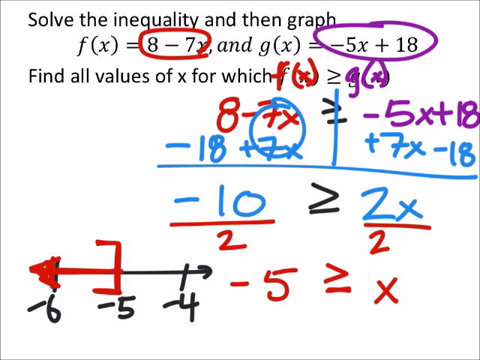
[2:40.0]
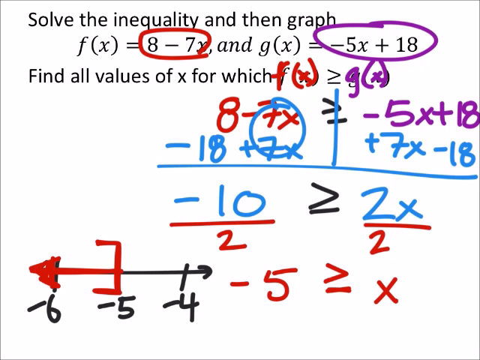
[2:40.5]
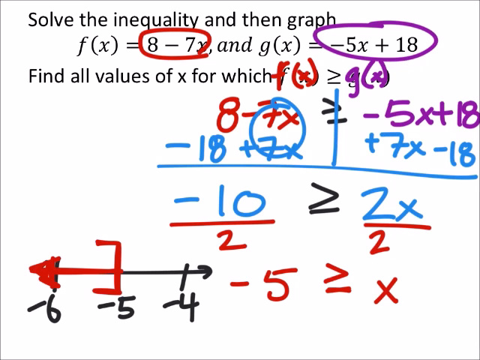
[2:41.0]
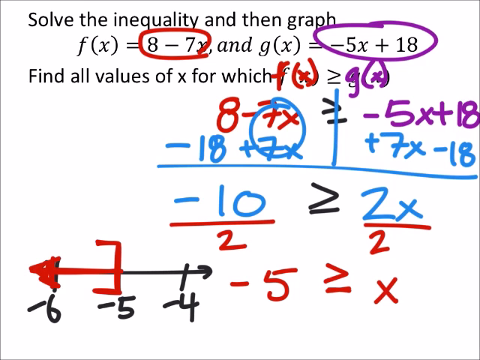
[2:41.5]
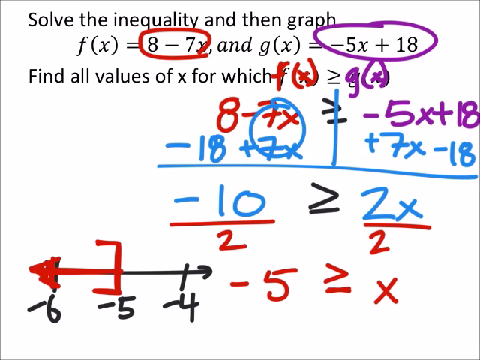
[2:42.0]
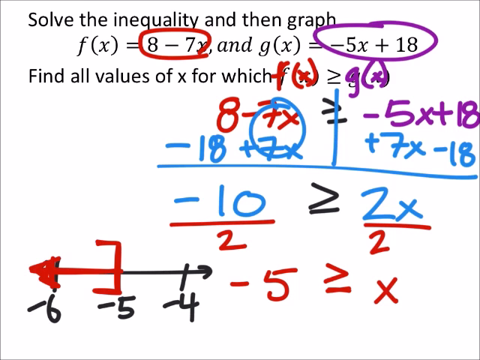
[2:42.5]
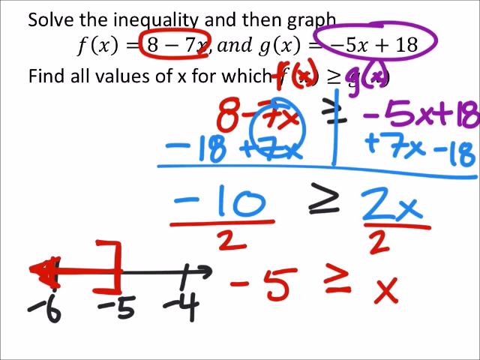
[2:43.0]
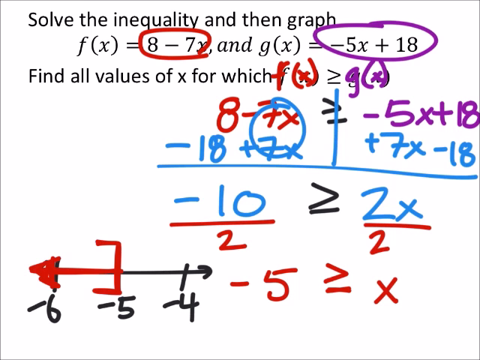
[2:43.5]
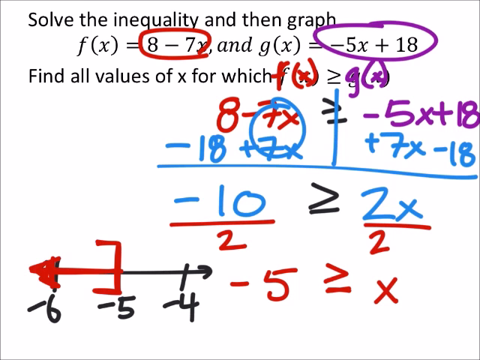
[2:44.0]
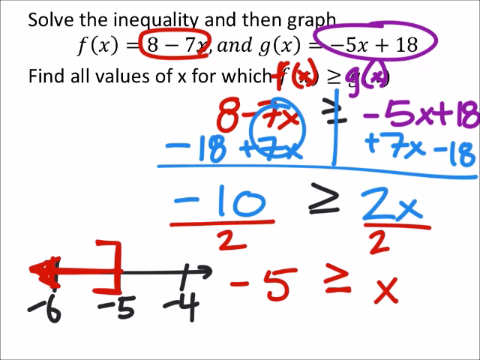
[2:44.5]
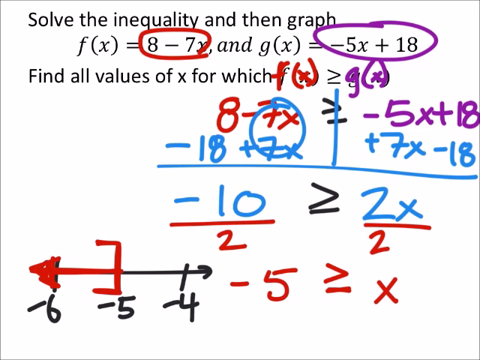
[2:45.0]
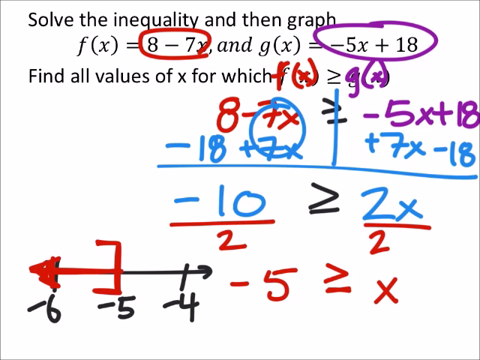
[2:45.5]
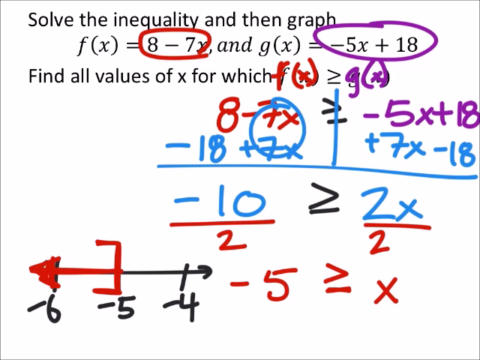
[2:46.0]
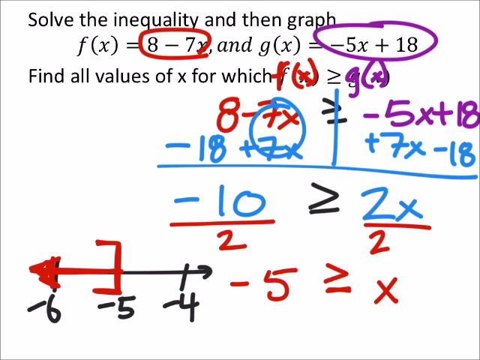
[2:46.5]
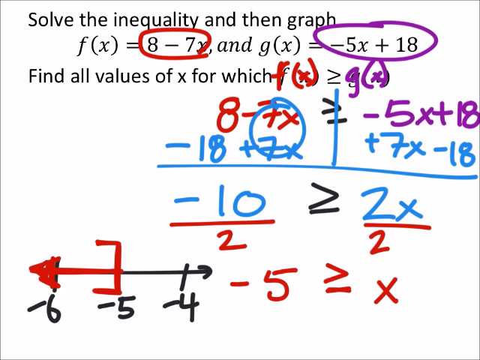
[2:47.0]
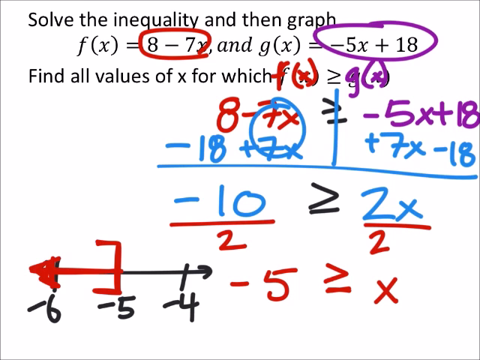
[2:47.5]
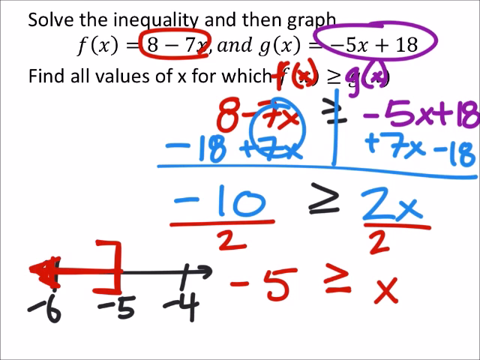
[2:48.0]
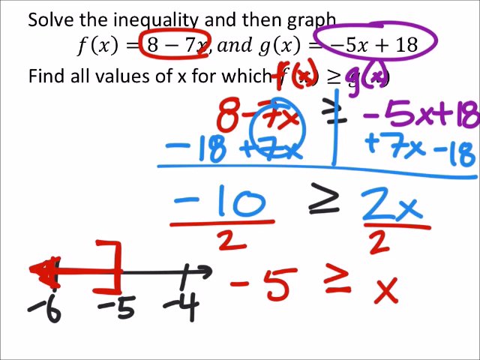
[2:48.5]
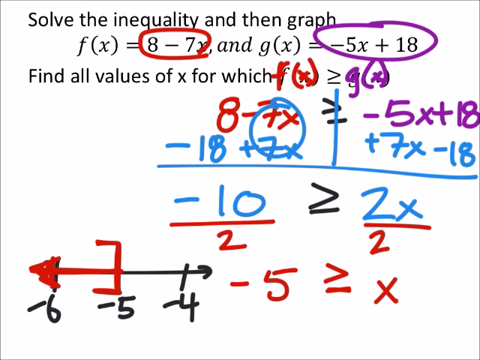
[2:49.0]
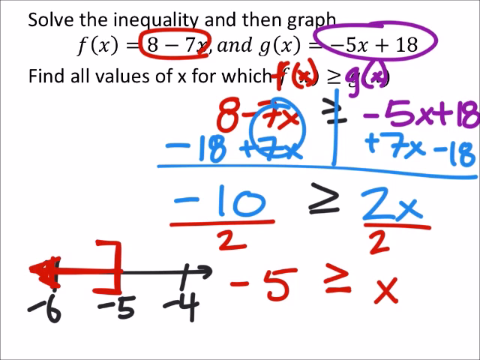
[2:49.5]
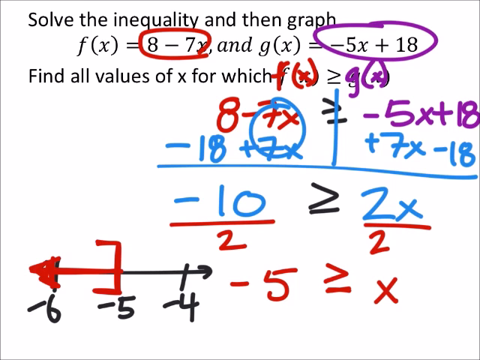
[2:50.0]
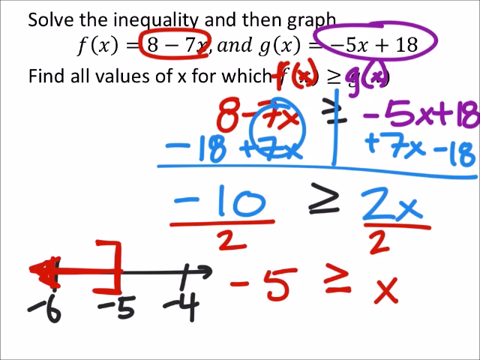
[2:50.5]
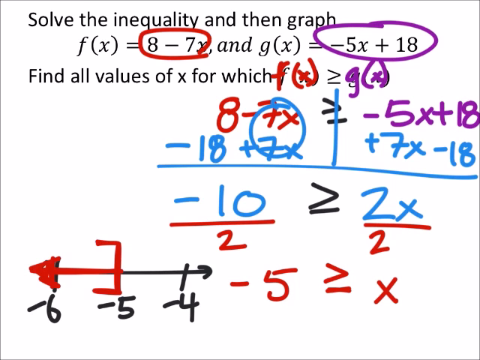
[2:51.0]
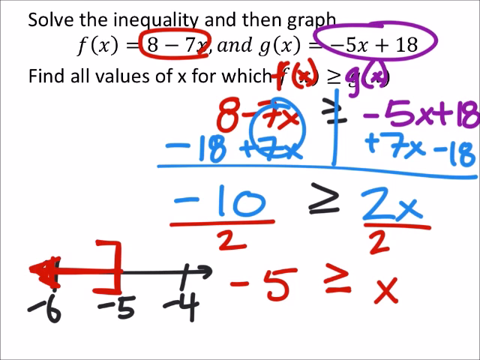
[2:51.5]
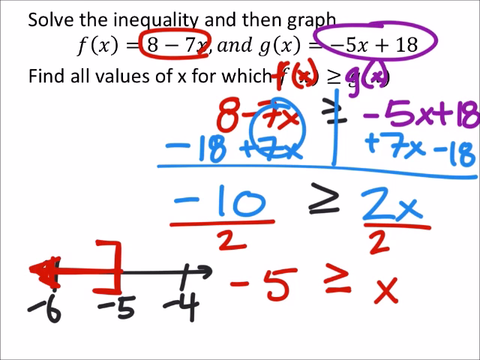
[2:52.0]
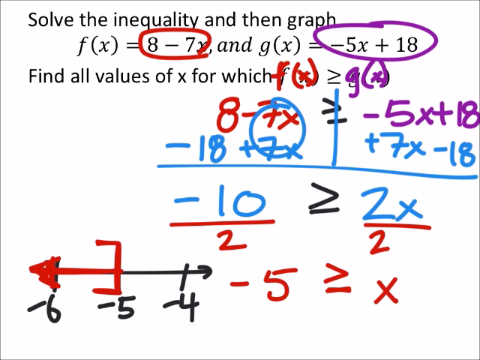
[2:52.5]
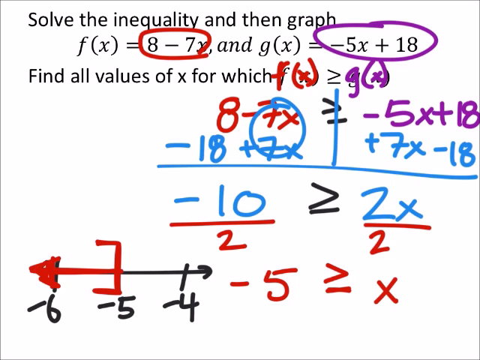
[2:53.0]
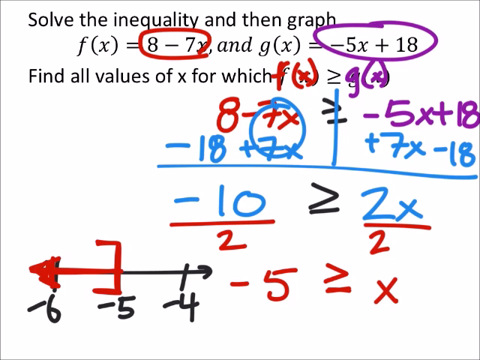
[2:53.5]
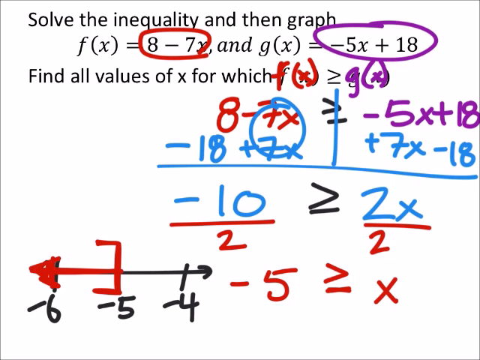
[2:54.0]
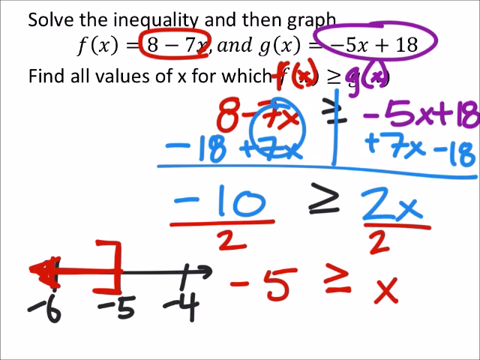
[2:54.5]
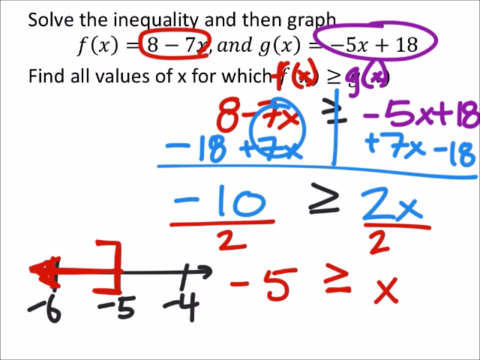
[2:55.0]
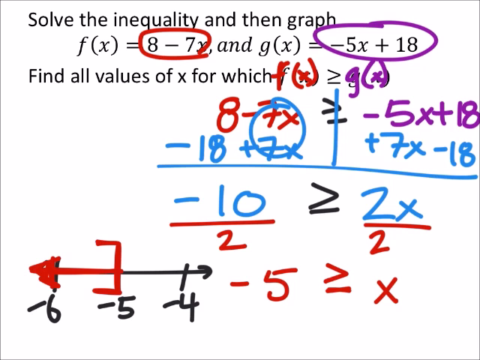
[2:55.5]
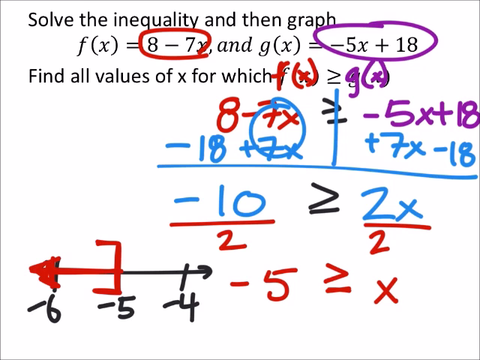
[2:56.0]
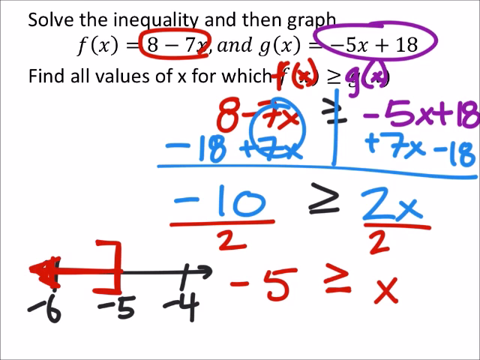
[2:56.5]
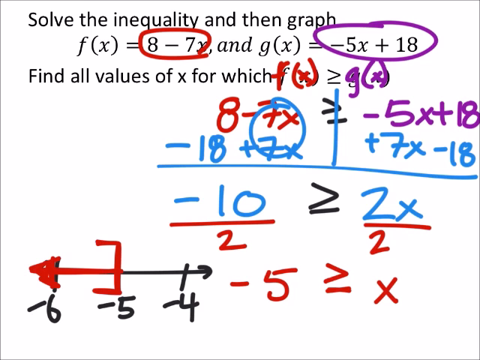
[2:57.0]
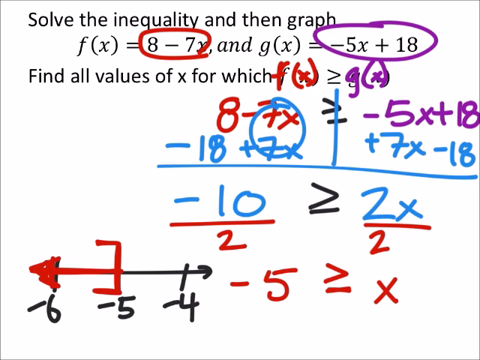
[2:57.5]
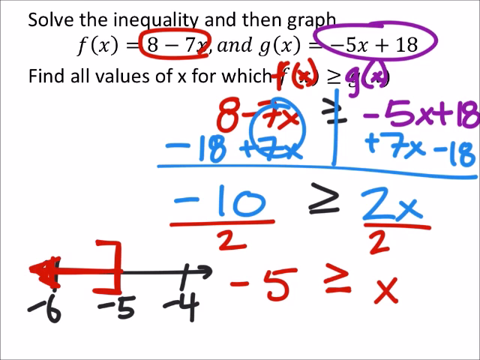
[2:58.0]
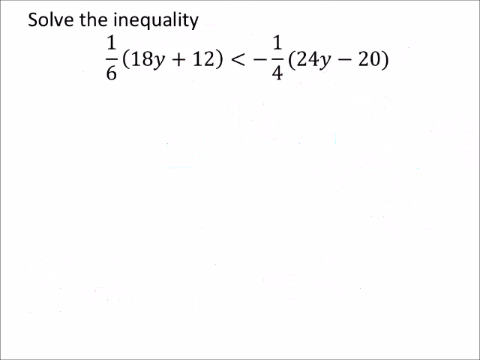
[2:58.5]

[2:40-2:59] The equation at the top of the screen, circled in red and purple, and the other red, blue, purple and black markings remain on the white background. At the very end, all the markings and information disappear for a brief second, and another equation appears at the top of the plain white background. Above it, text says "solve the inequality." The video ends abruptly after showing this equation for a brief second.